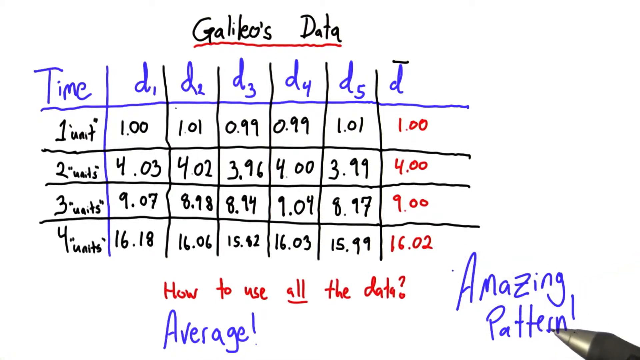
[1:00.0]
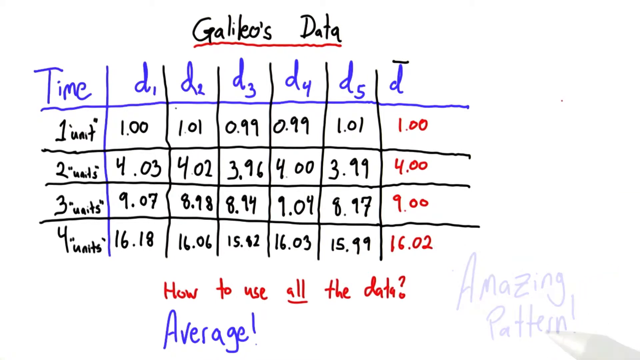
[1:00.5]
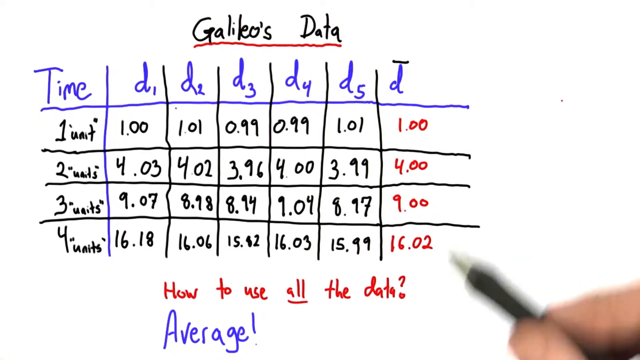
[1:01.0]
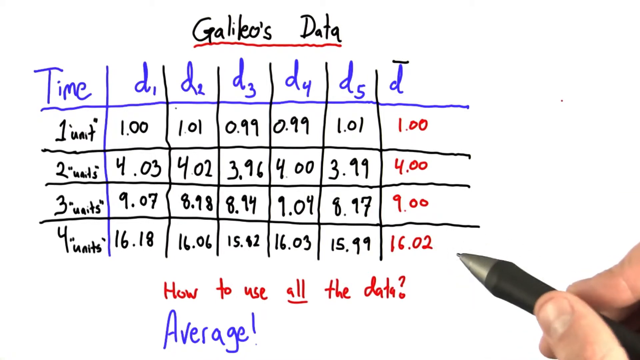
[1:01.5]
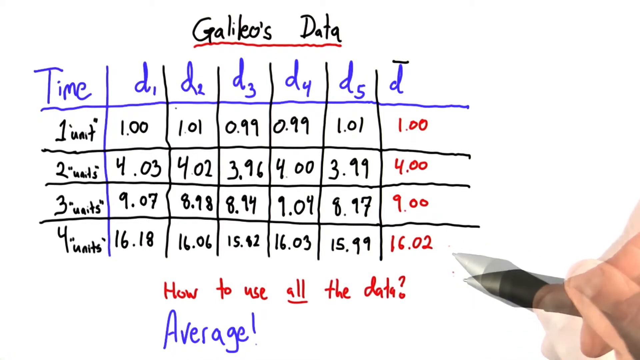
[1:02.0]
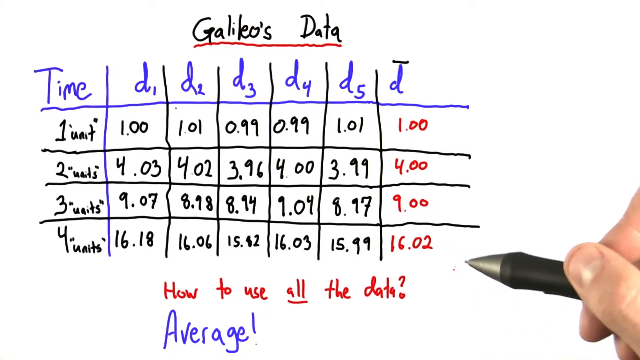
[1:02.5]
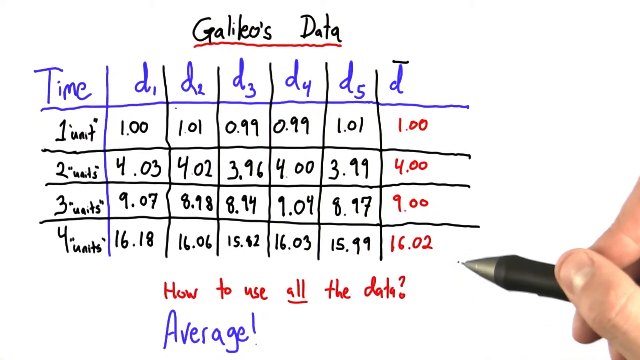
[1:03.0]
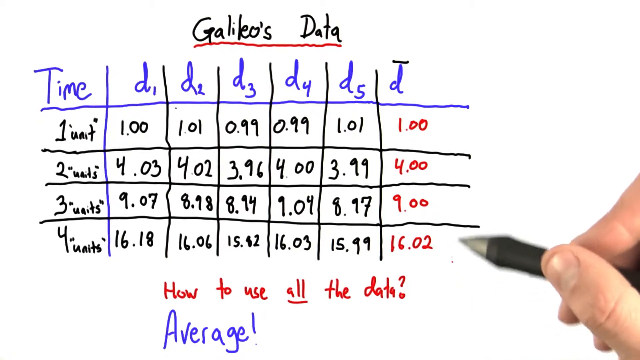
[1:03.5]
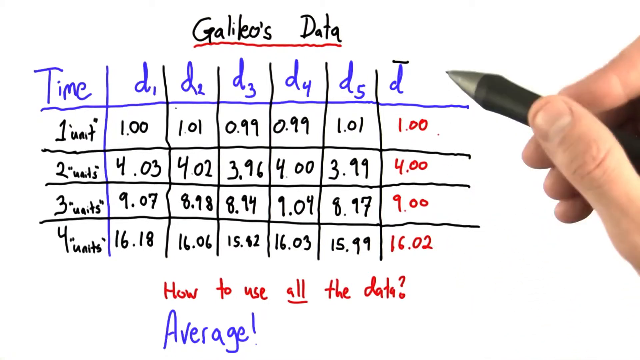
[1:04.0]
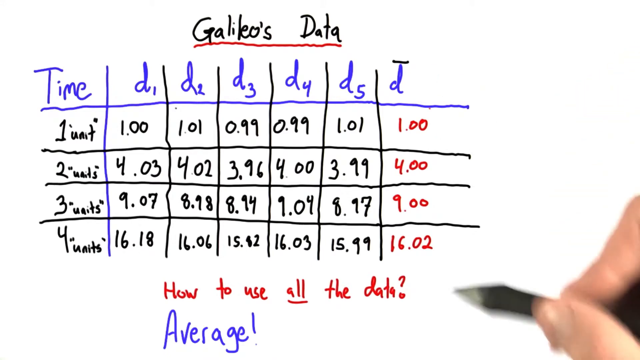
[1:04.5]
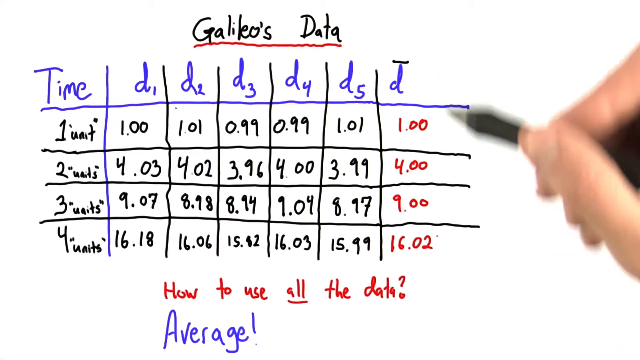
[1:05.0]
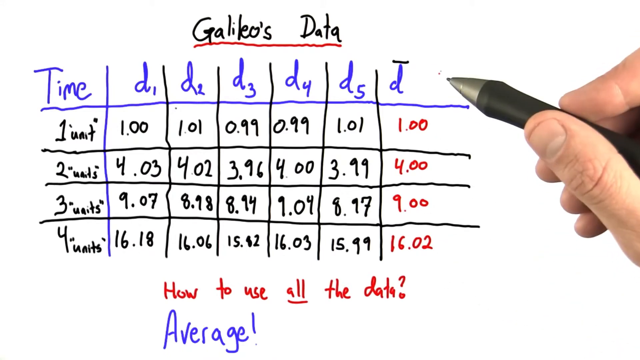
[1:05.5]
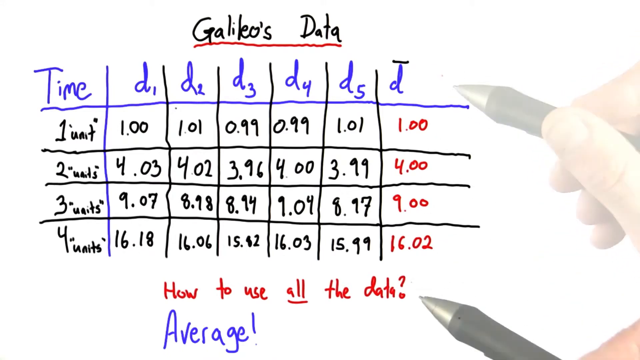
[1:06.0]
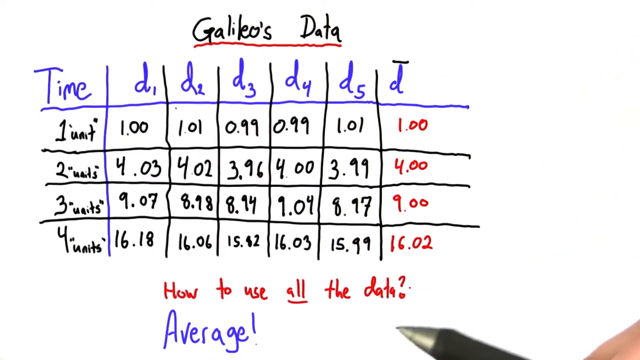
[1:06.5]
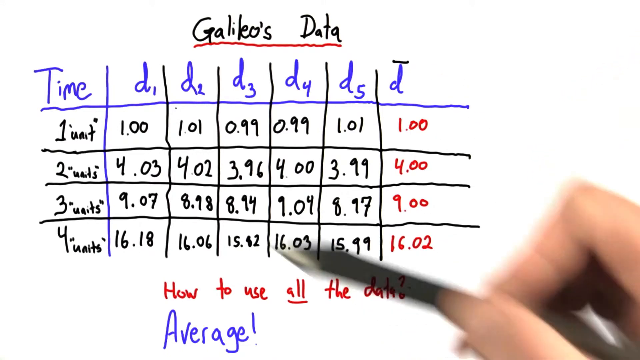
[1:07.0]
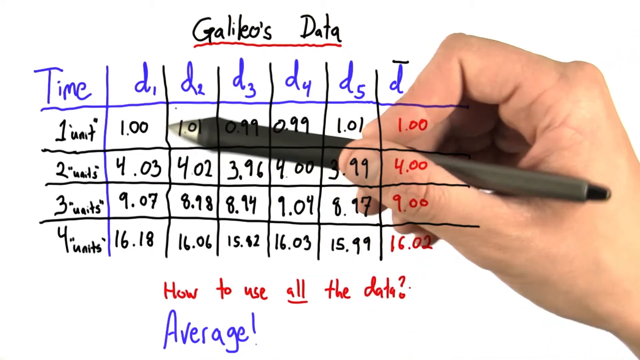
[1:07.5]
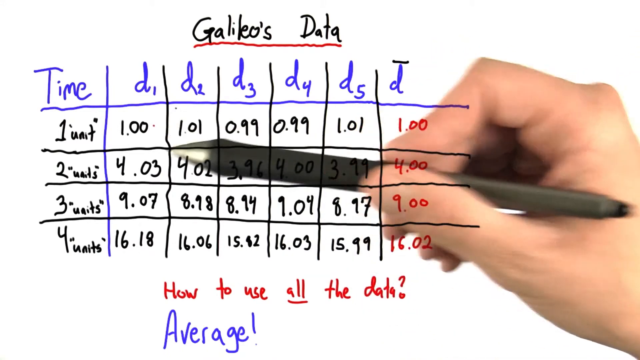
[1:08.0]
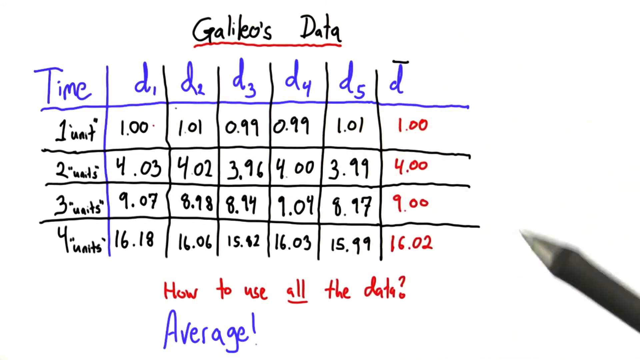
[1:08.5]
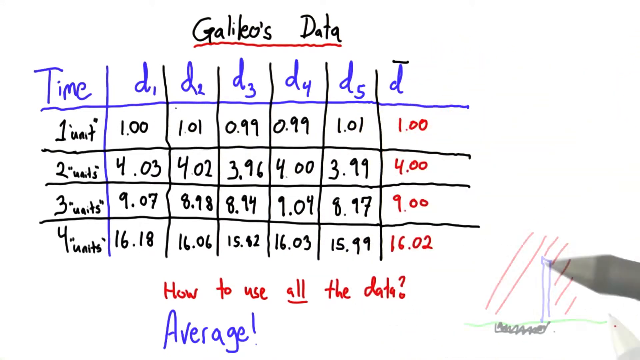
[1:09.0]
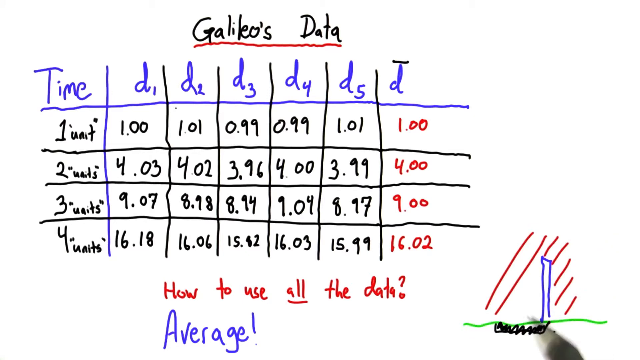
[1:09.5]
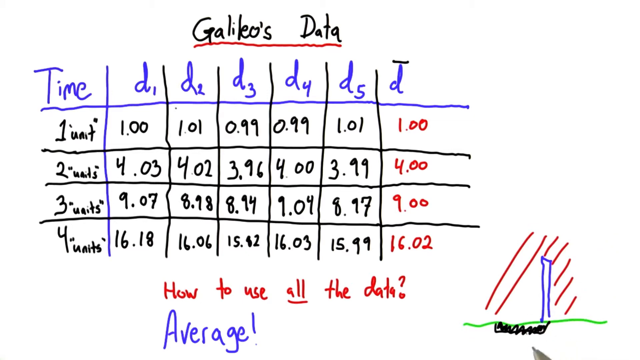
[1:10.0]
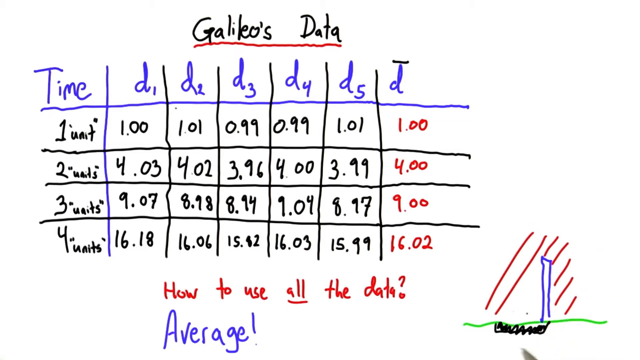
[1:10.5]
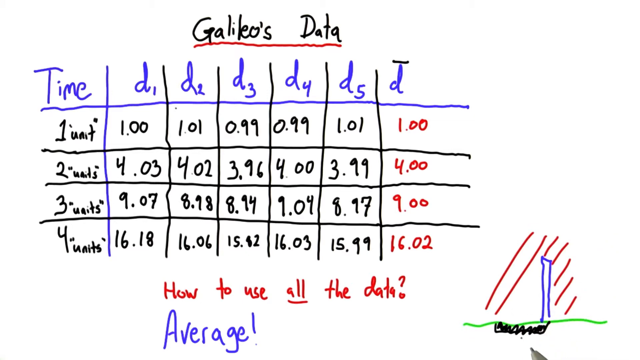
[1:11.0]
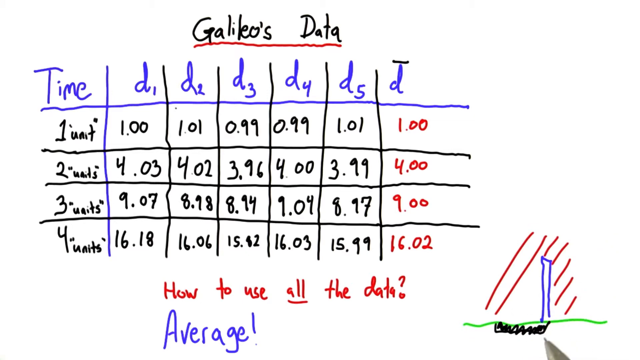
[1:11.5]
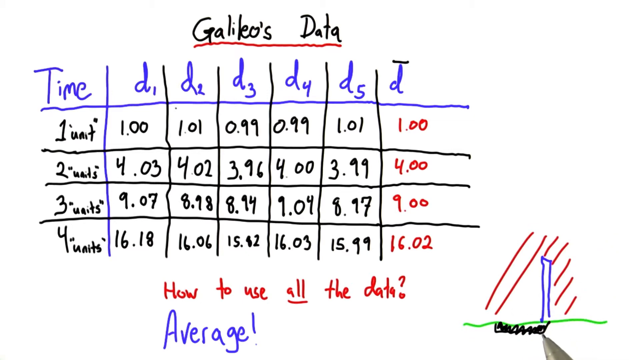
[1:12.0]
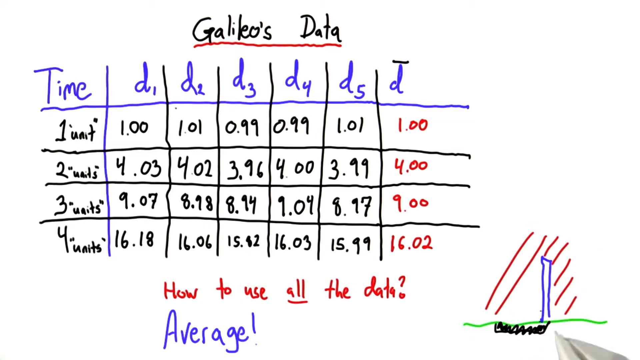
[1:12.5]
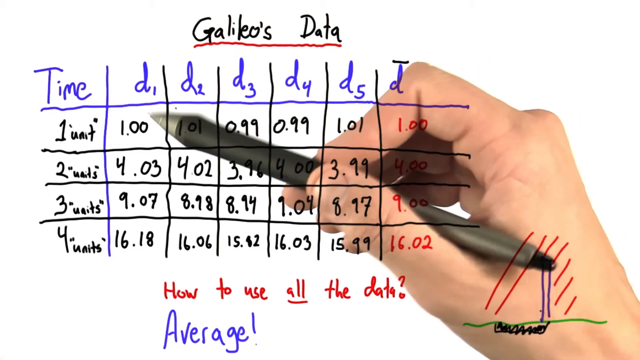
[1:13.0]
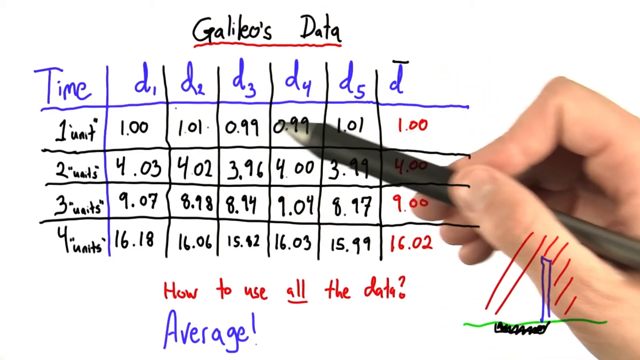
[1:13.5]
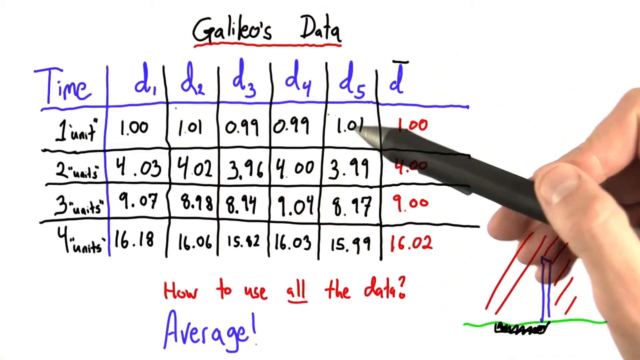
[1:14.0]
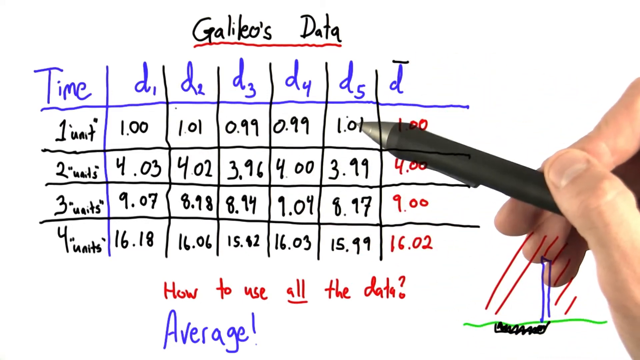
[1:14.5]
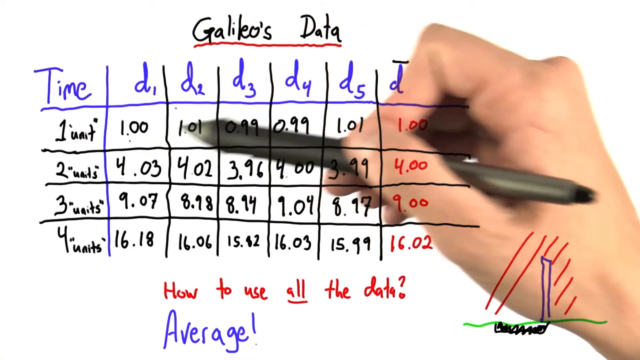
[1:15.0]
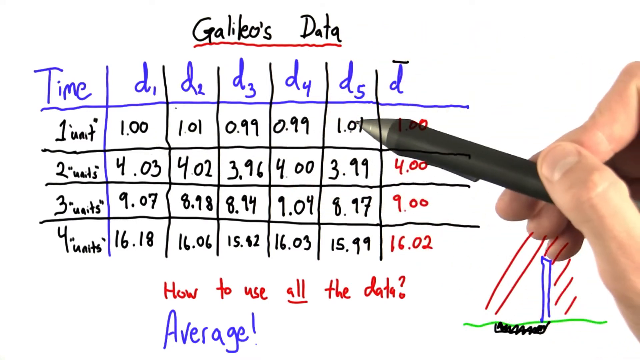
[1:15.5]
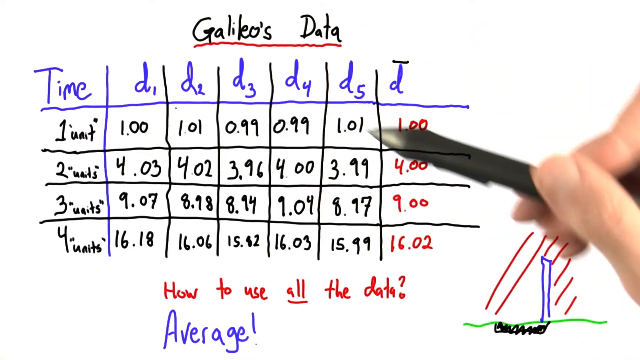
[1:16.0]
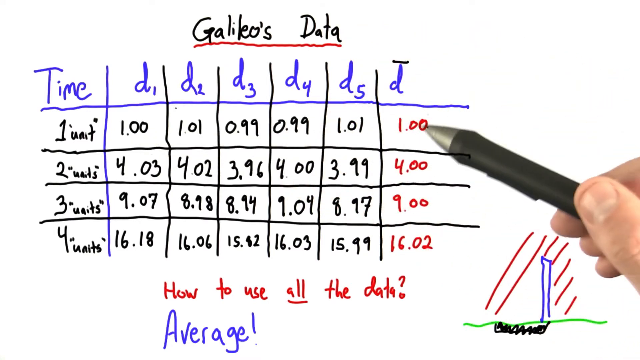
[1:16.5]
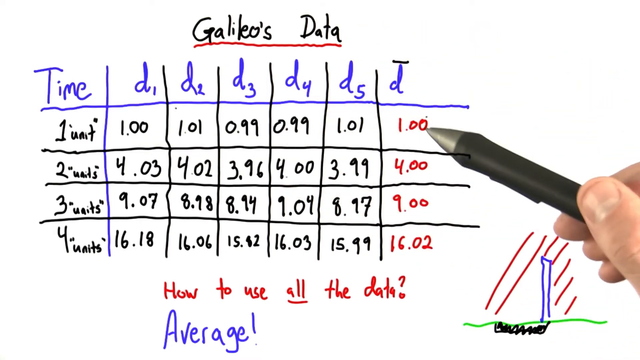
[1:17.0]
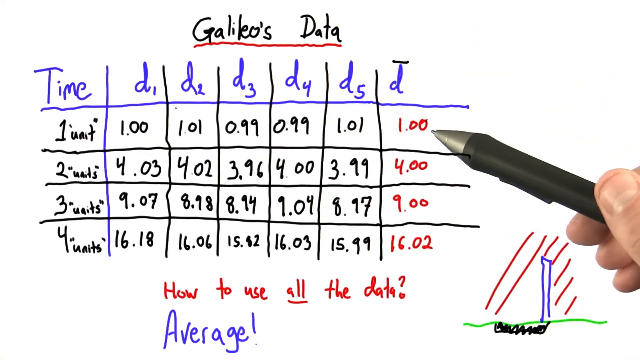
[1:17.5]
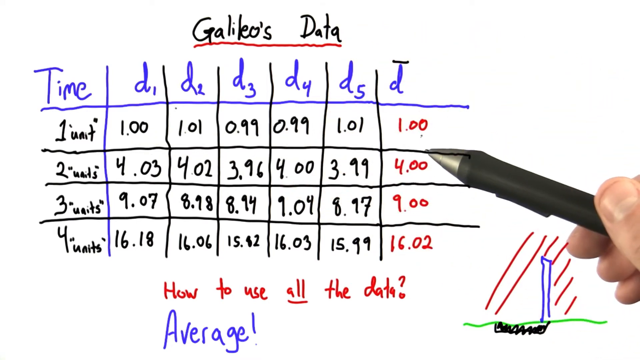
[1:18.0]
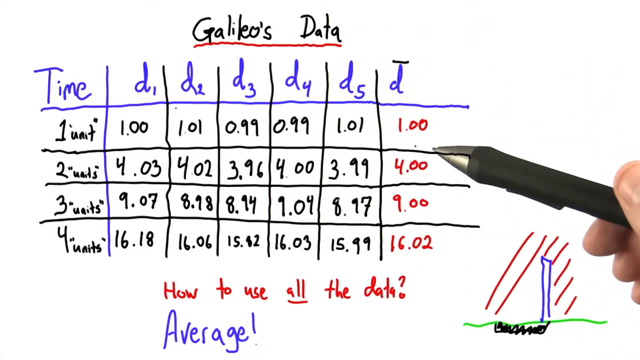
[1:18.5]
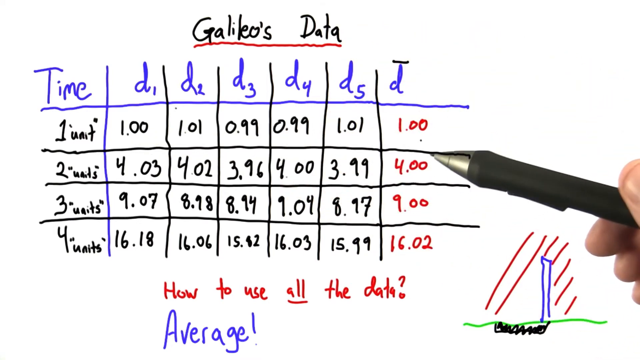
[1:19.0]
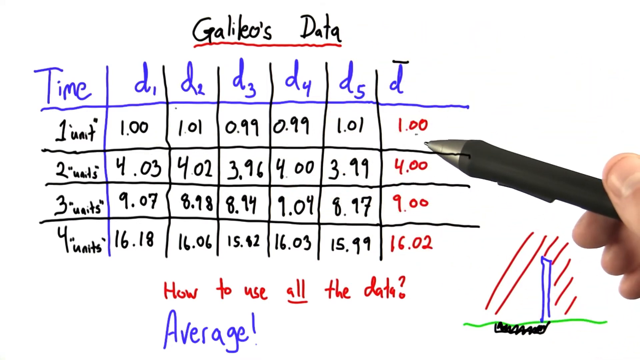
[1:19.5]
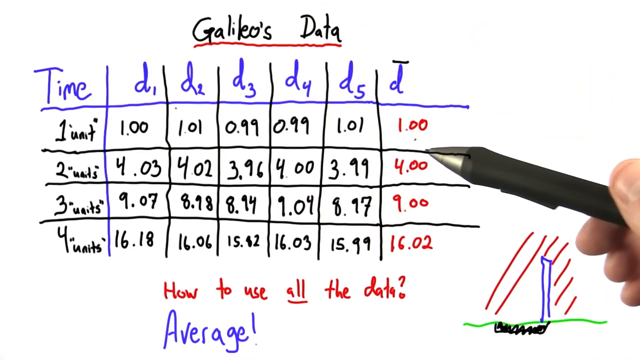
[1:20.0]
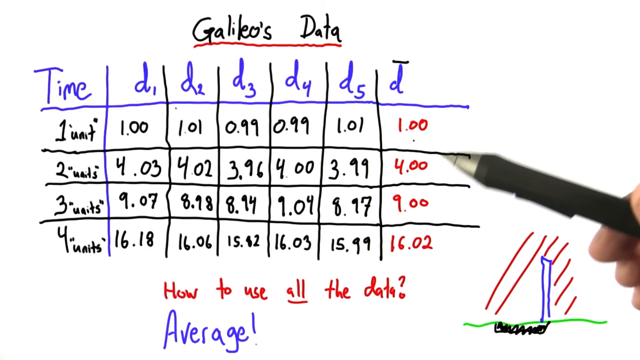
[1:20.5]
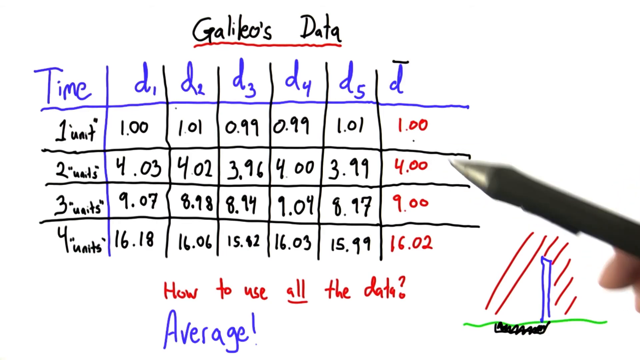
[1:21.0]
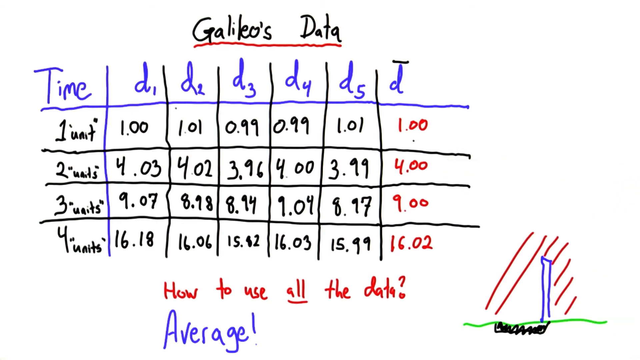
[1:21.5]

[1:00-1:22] In the lower right part, the person has written out the pattern that the average time is the number of units multiplied by itself, for example 2 units giving 4 because 2 times 2 equals 4, holding for the first four values up to 4 units. A drawing of the experimental procedure is also made at the bottom right of the screen: a floor in green, something like a pillar in blue that blocks heat or light so it does not go to the left side, rays in red passing through the blue pillar, and a black part of the floor where the rays do not fall.